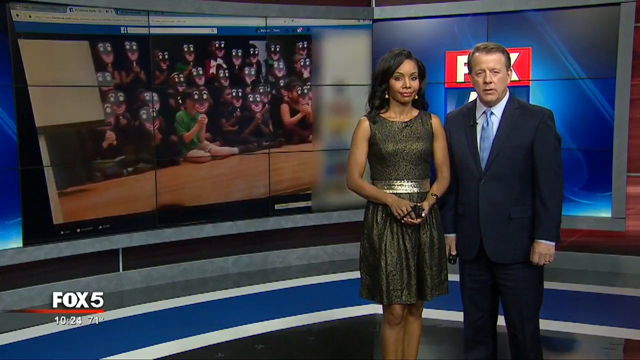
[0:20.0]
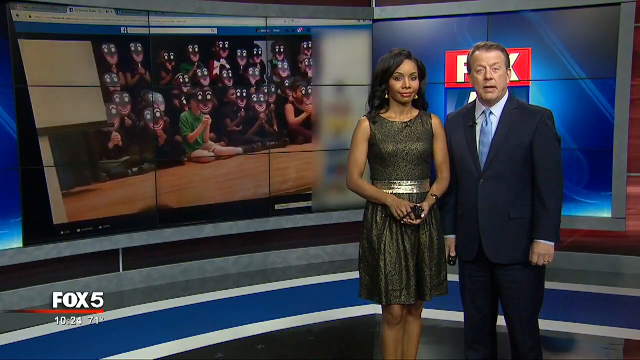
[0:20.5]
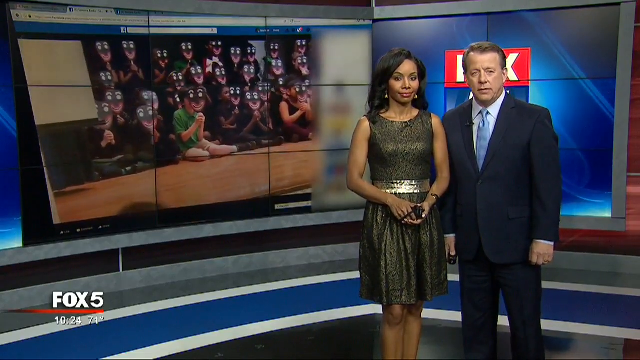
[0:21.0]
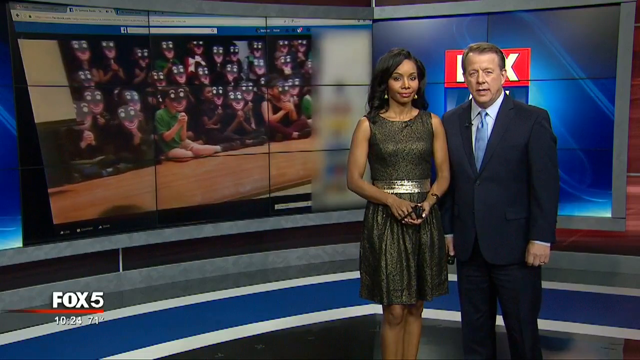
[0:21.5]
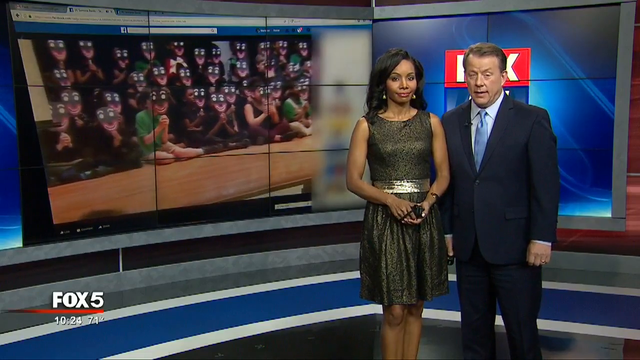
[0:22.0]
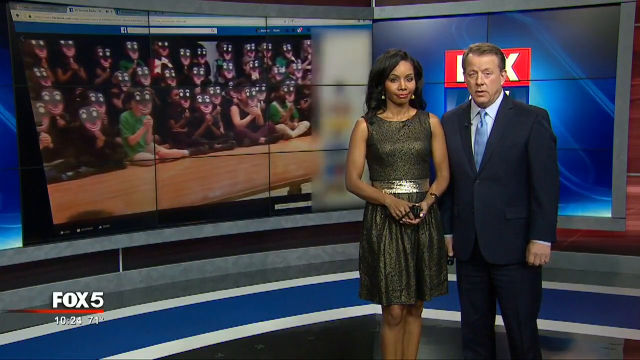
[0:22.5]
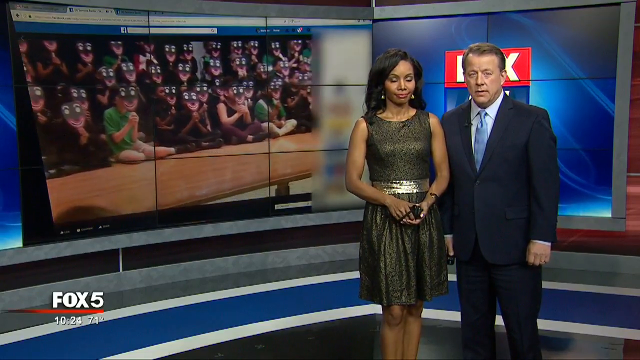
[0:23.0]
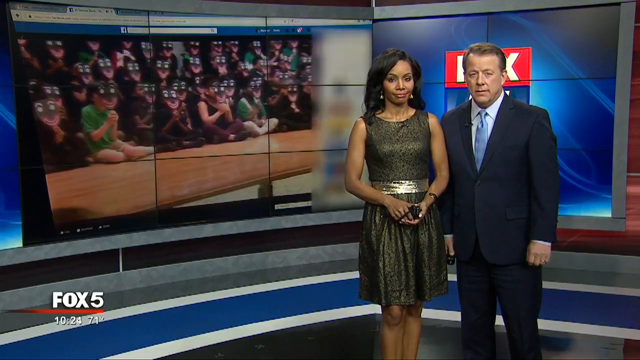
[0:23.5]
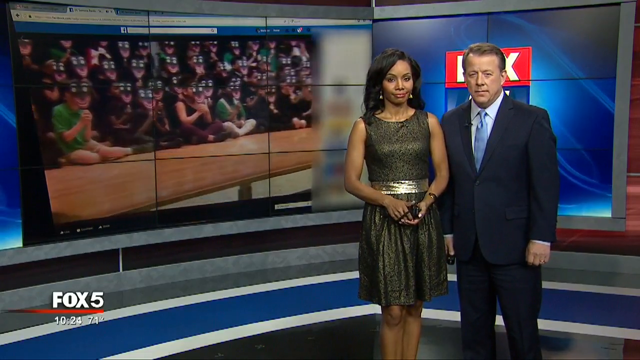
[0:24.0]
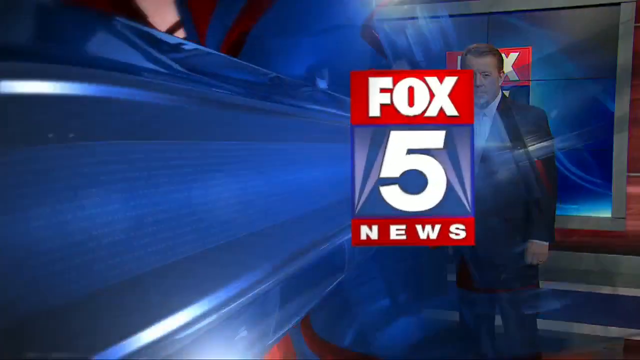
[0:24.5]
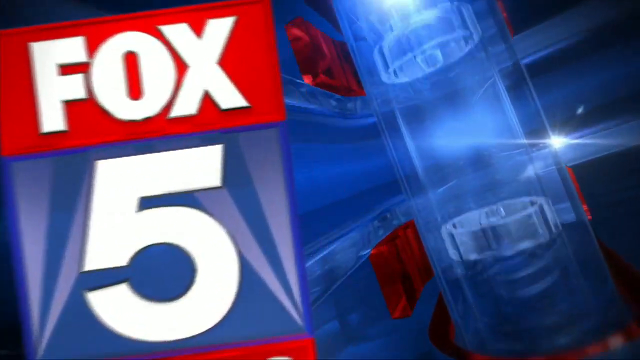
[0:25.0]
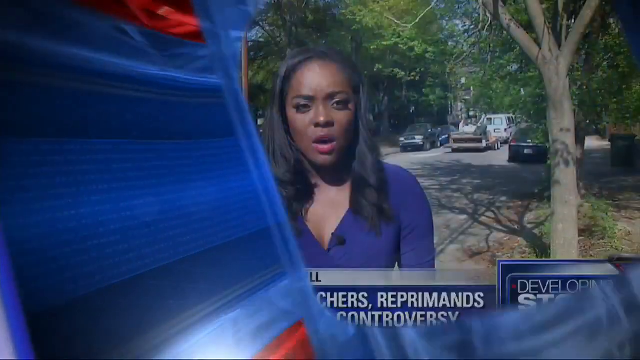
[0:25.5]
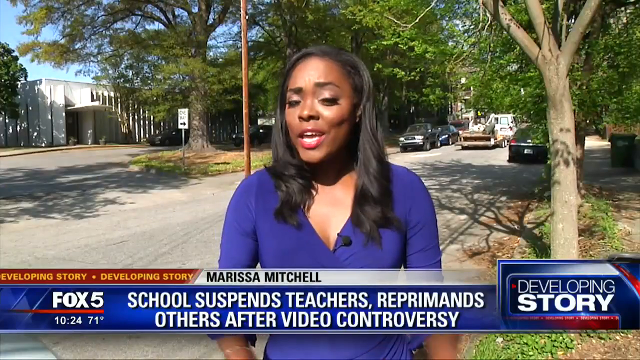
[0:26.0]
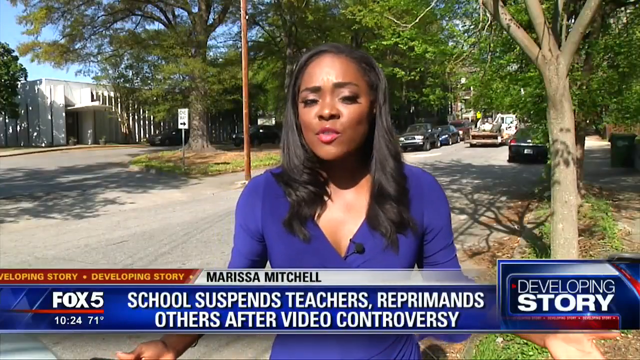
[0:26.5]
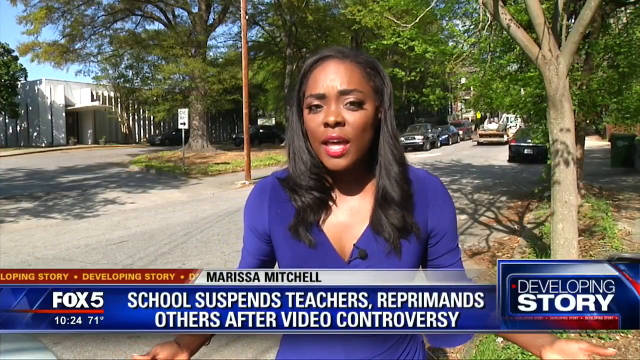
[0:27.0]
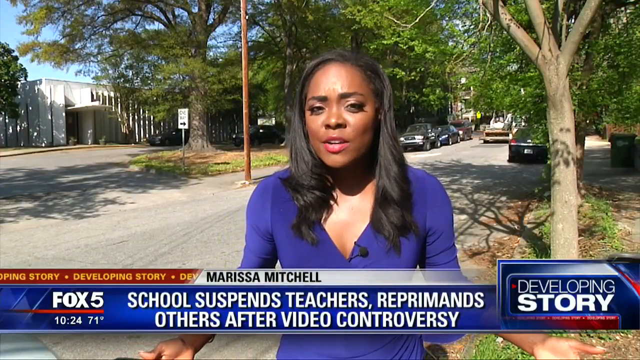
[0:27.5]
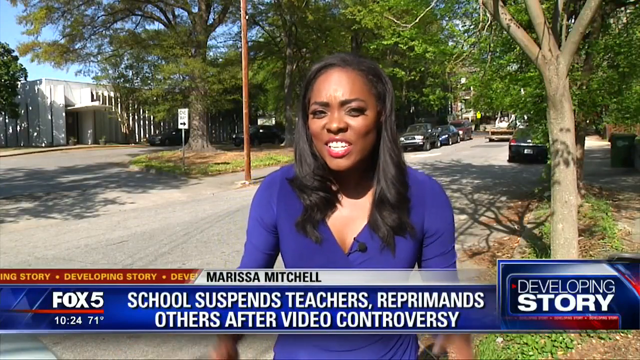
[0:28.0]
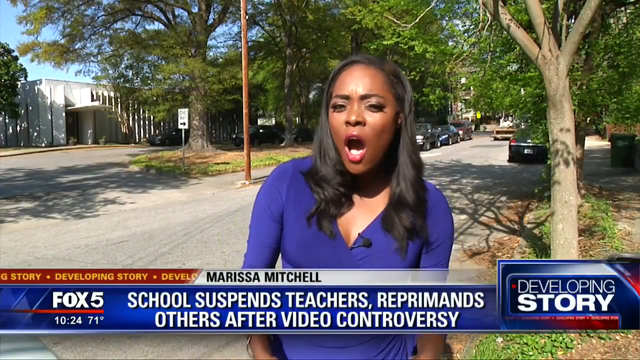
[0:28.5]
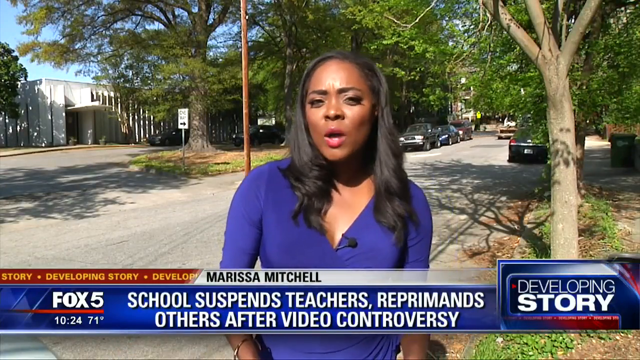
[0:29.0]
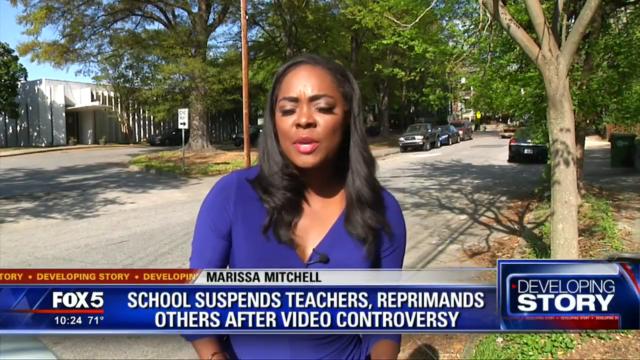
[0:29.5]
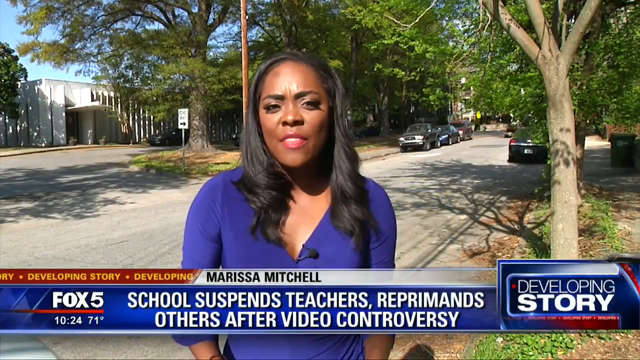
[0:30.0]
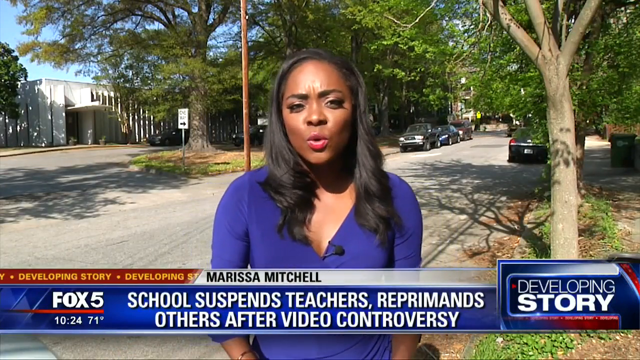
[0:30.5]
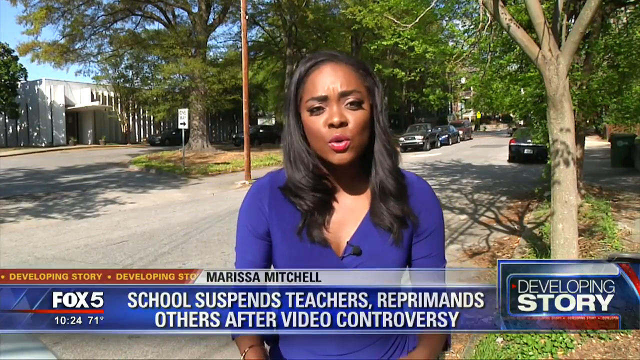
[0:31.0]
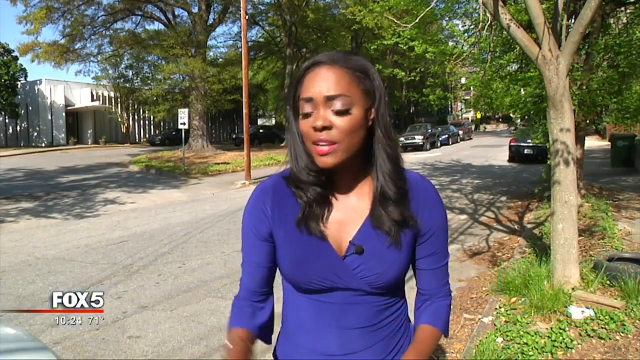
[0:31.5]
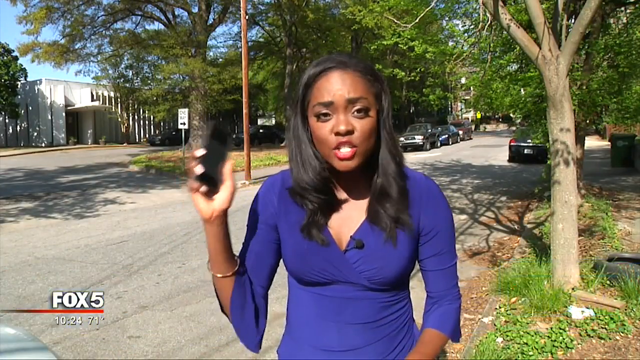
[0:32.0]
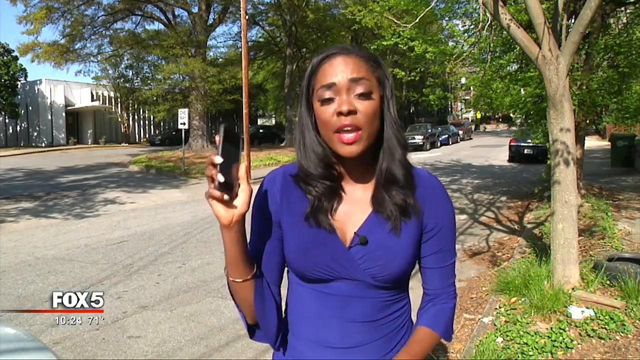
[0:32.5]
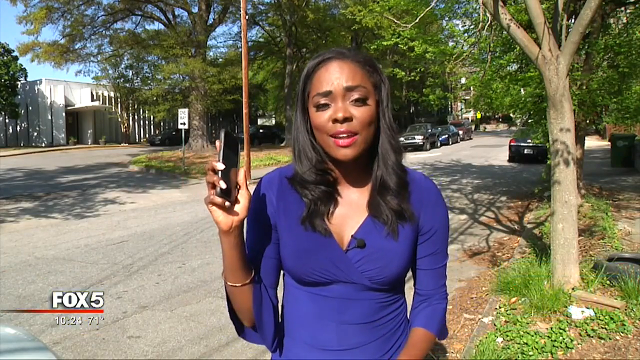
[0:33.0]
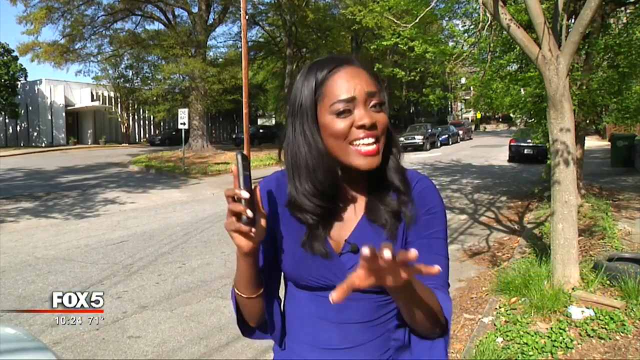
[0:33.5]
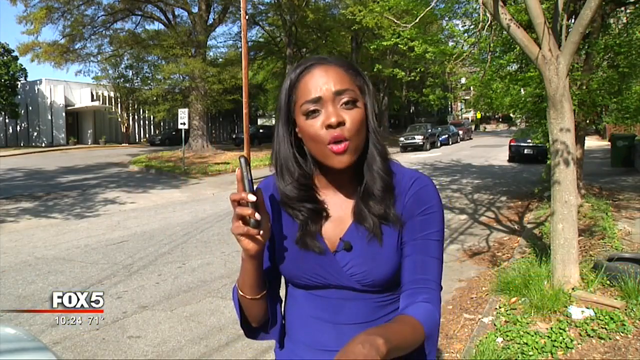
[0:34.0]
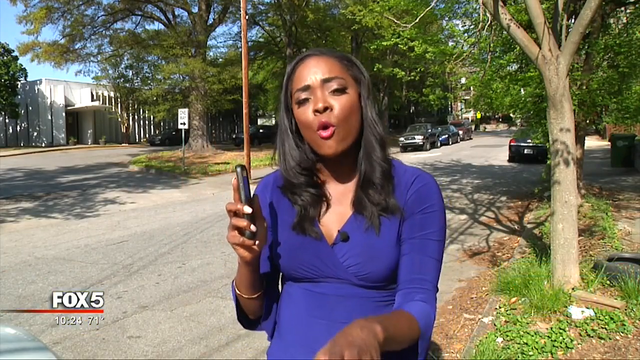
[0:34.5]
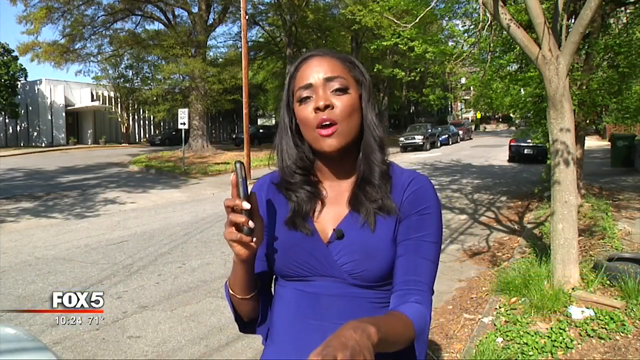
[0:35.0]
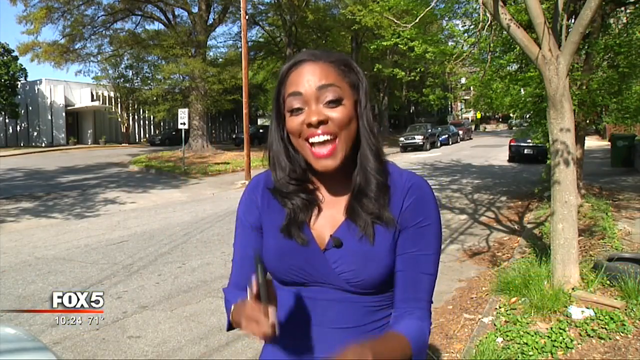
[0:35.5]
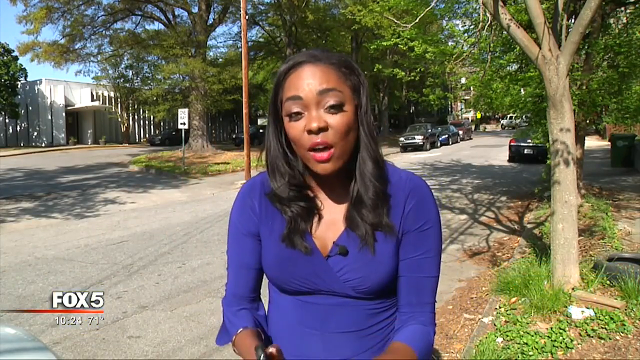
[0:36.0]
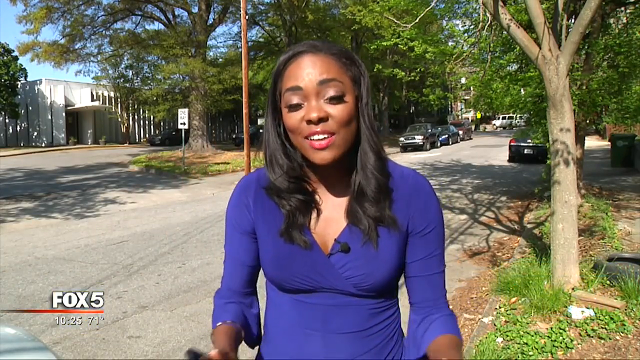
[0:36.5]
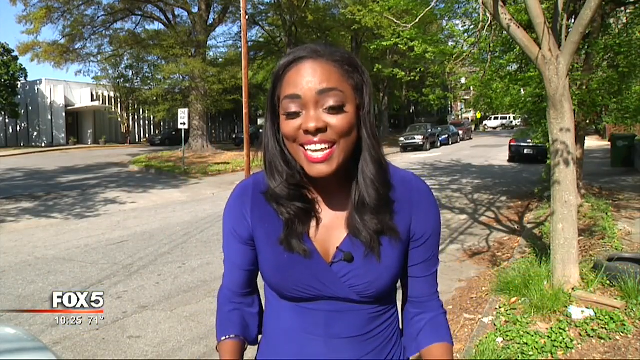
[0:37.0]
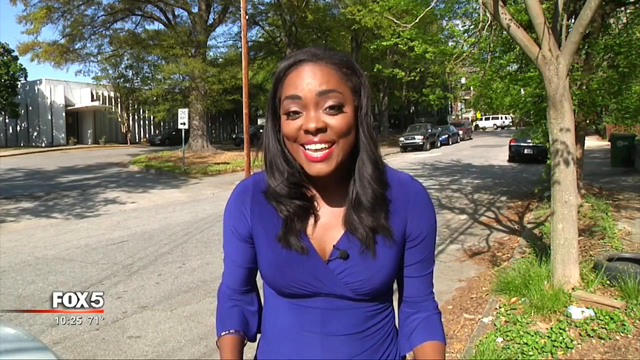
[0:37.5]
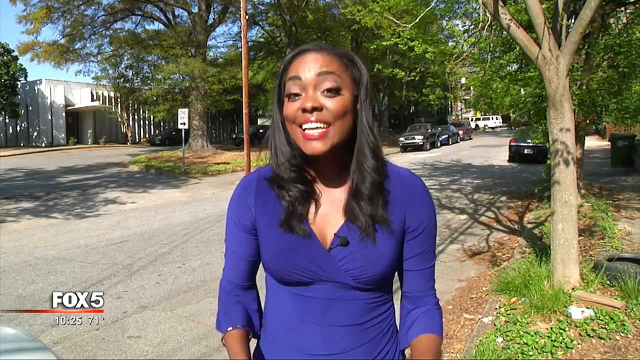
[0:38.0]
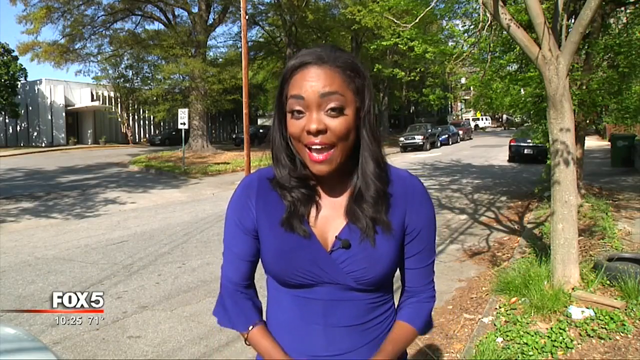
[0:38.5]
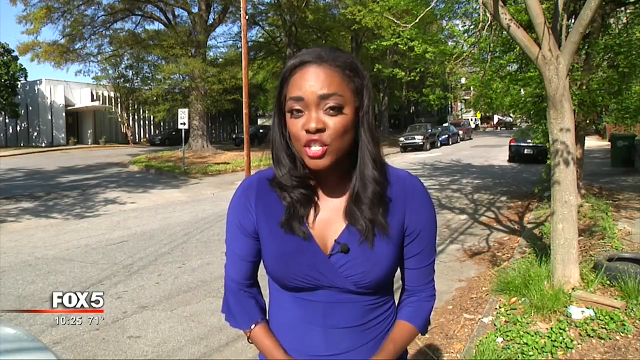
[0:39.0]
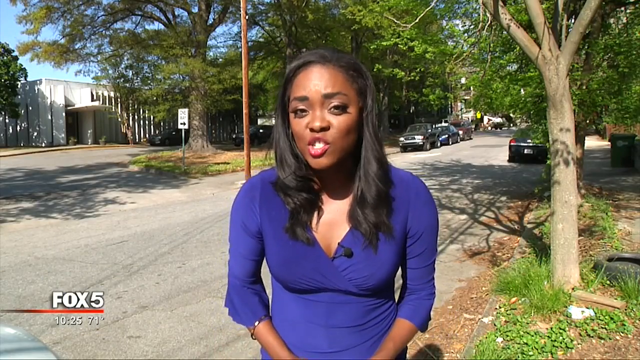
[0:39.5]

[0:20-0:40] The white man is reporting the news as the broadcast is about to transition to another scene. On a projector screen behind the woman and the man is a picture of many children who hide their faces with black masks that have white eyes on them. The children wear black and green T-shirts and sit in three orderly rows, apparently on a brown floor. Because their faces are covered, it is impossible to tell whether they are boys or girls. The page showing the picture looks like it was taken from Facebook, and on the right-hand side Fox 5 News has hidden something, apparently for privacy.